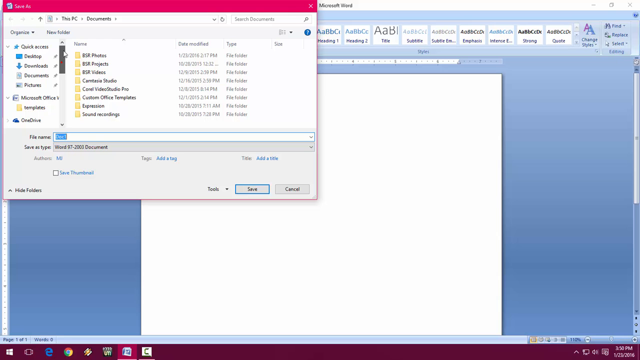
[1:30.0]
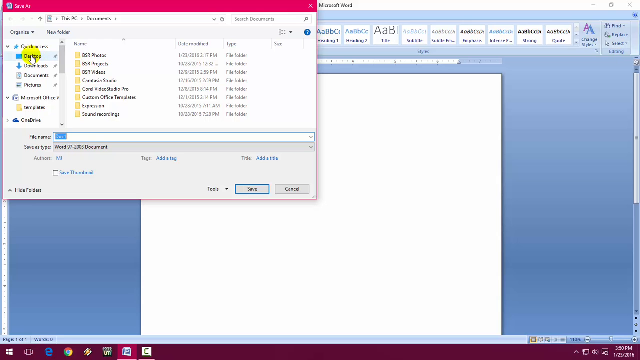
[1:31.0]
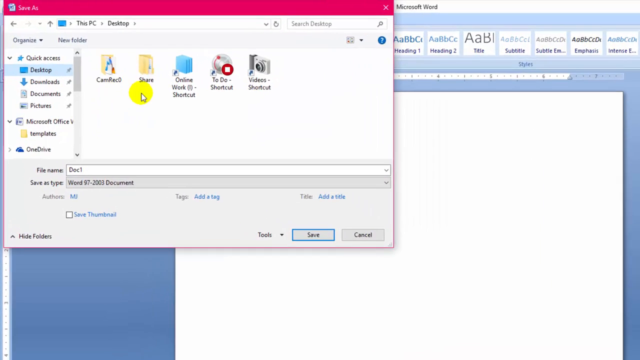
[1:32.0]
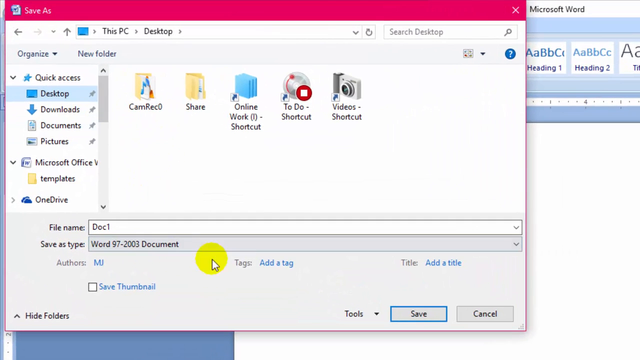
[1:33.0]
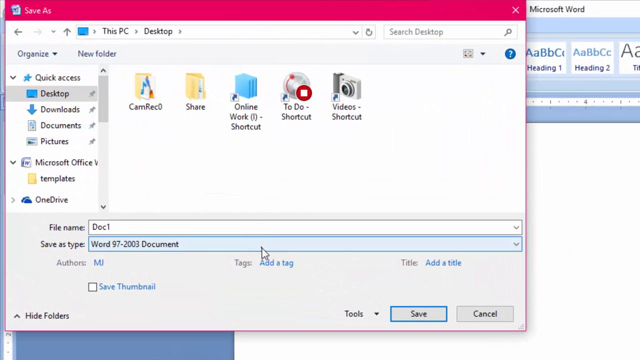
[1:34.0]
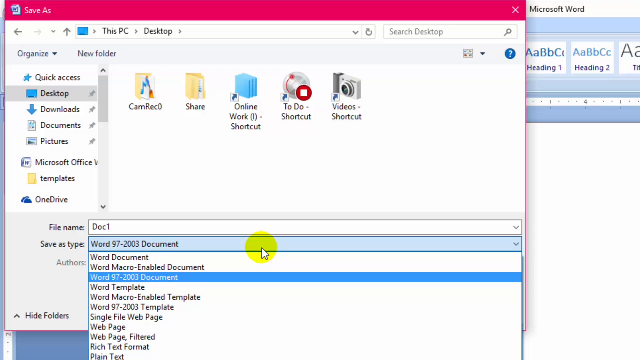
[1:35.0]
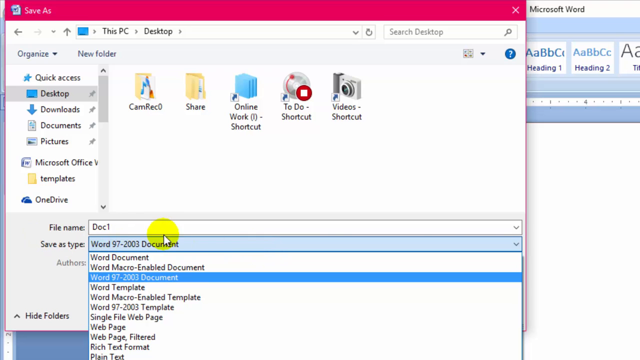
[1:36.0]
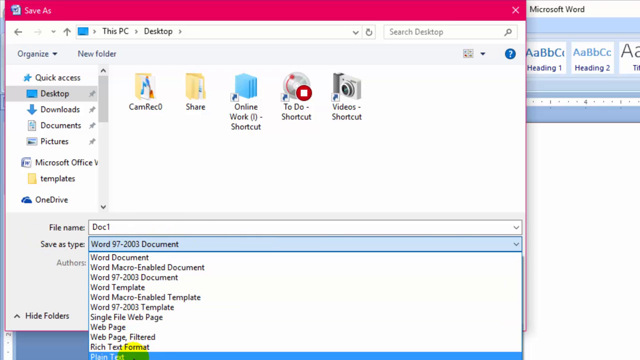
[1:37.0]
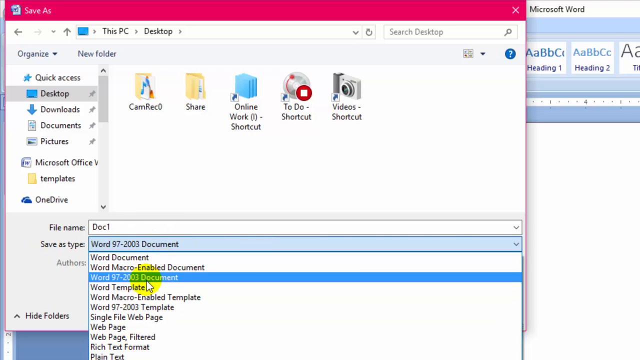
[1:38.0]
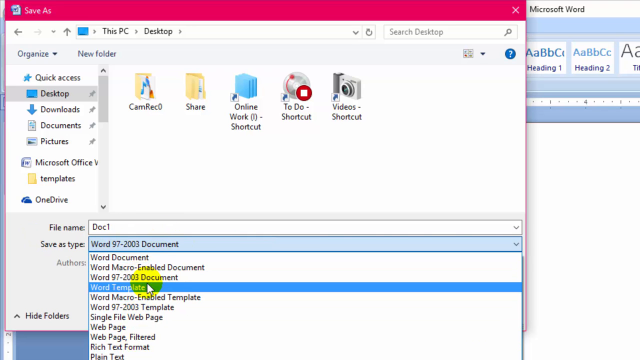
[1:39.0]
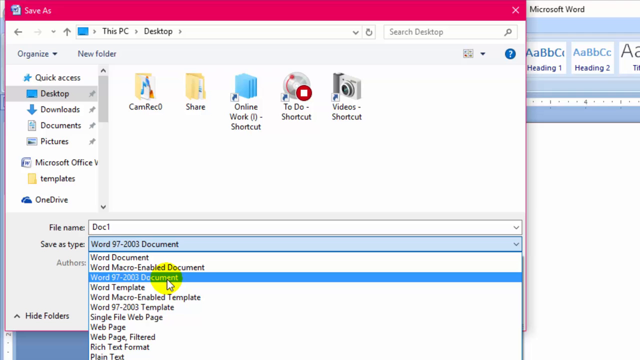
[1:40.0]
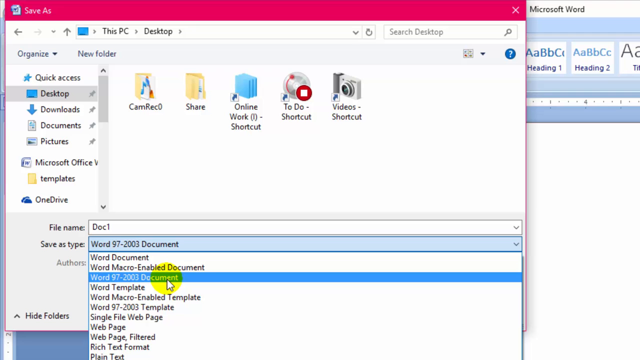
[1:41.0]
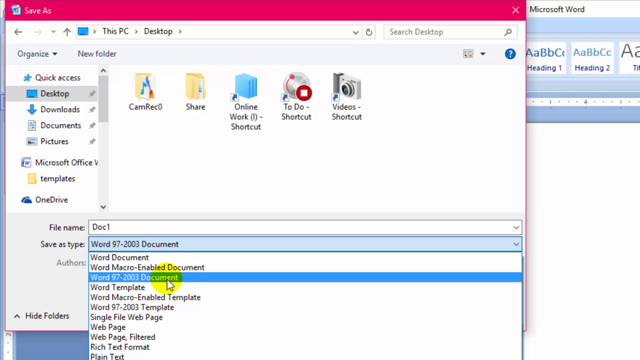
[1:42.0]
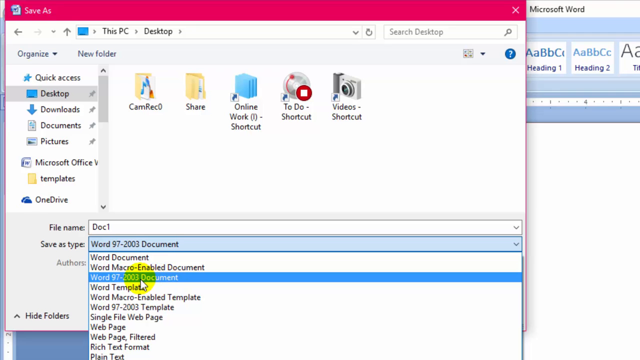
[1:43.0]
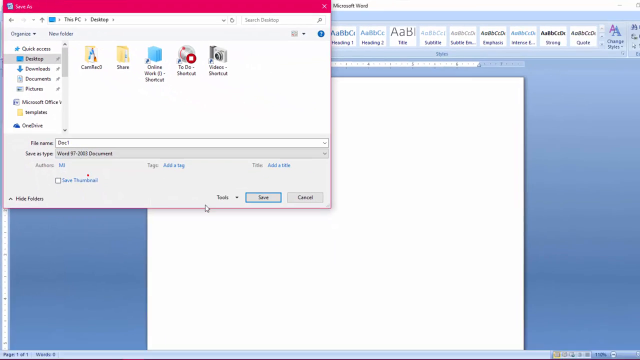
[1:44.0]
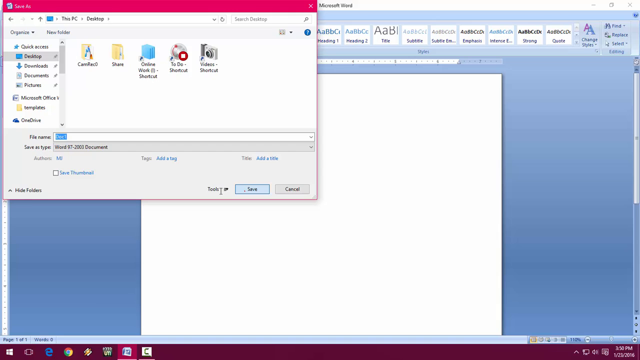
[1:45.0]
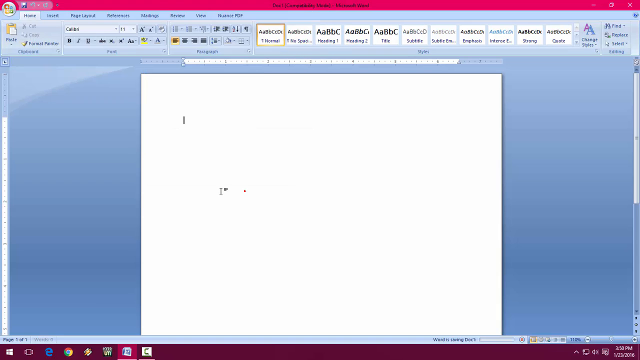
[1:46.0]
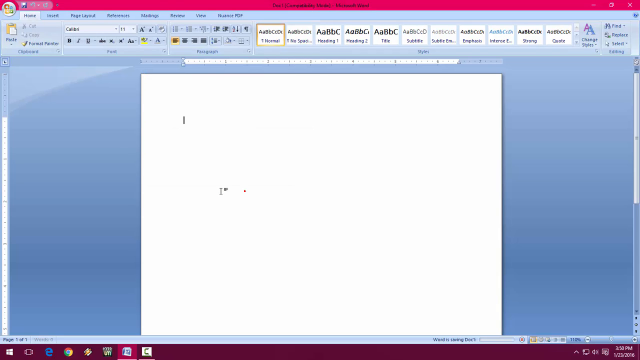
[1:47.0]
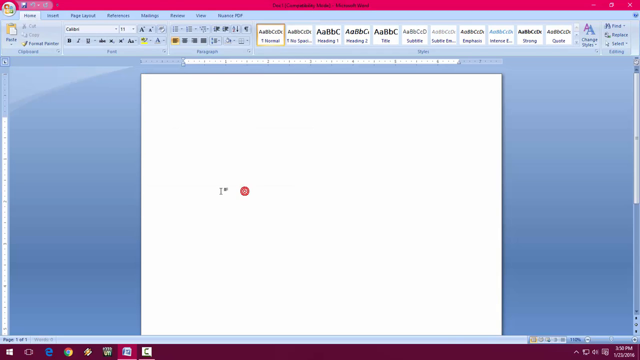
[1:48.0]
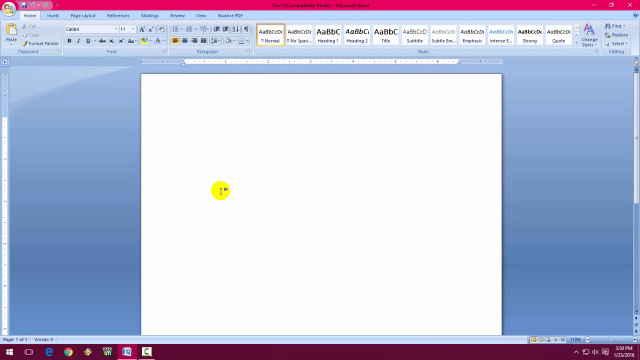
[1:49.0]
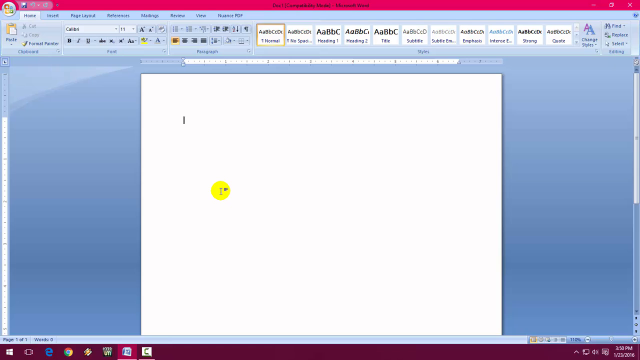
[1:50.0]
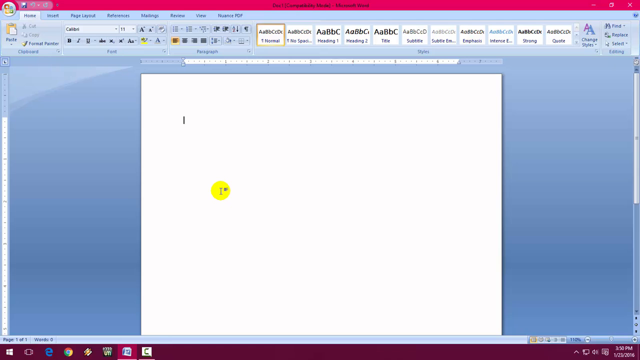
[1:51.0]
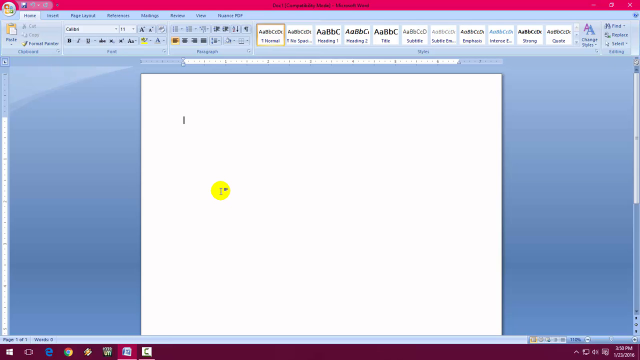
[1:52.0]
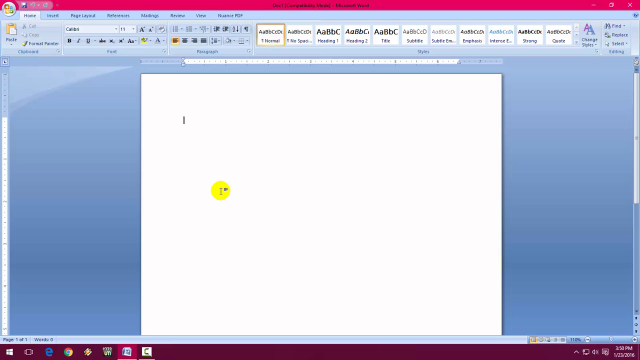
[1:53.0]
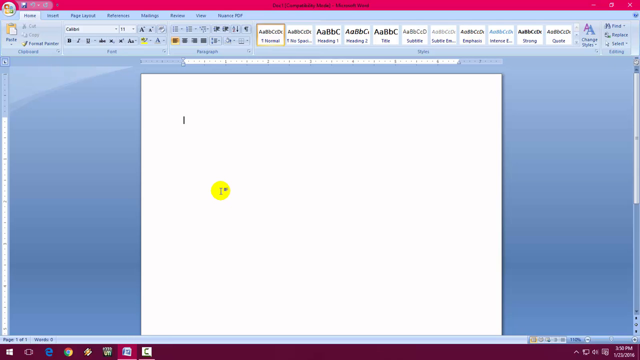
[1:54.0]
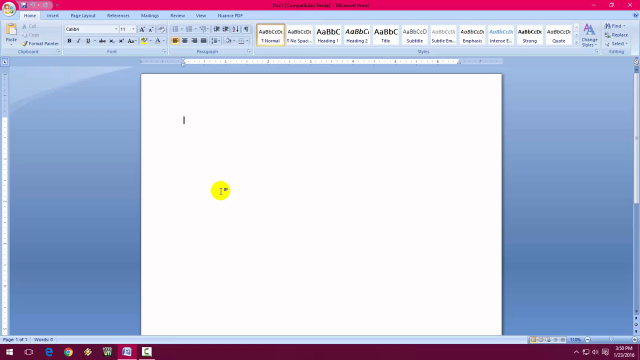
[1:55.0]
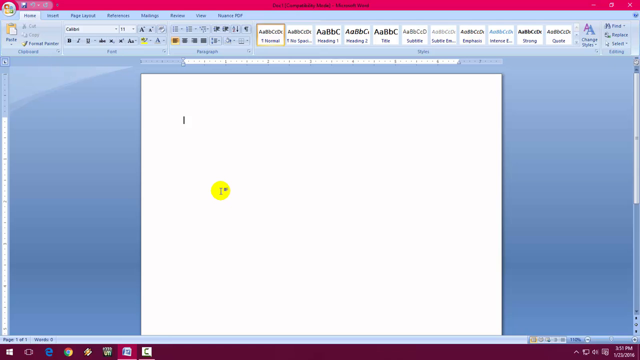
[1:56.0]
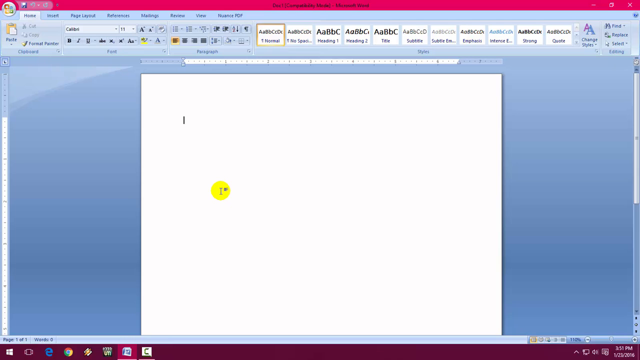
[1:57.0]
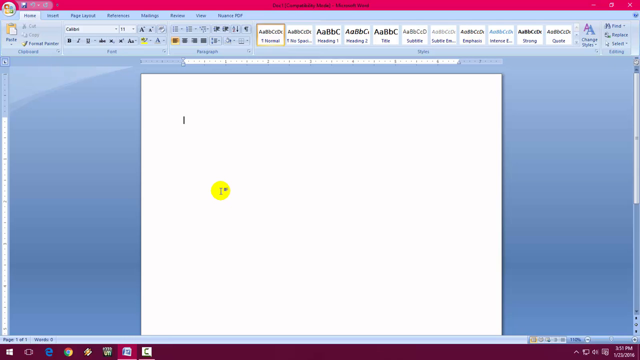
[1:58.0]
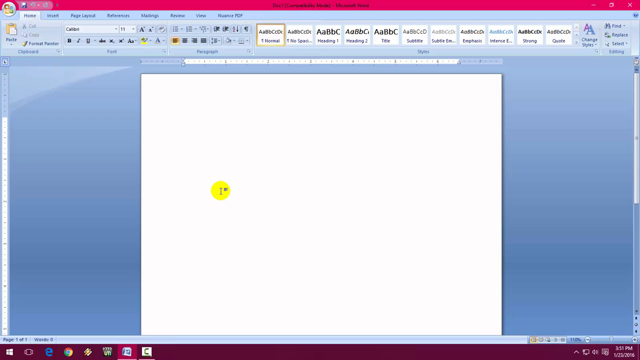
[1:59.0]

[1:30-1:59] The Save As window is open and the user explores its different parts. Clicking the Desktop option shows many files in the Desktop location. The file name of the document is doc1, and its save-as type is Word 97-2003 Document, seemingly showing that the earlier change to the save format now applies to documents saved on that computer. The user then saves the document to the Desktop, and the view returns to the blank document from the beginning.